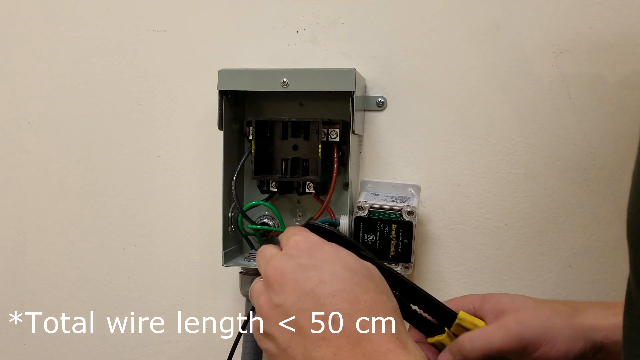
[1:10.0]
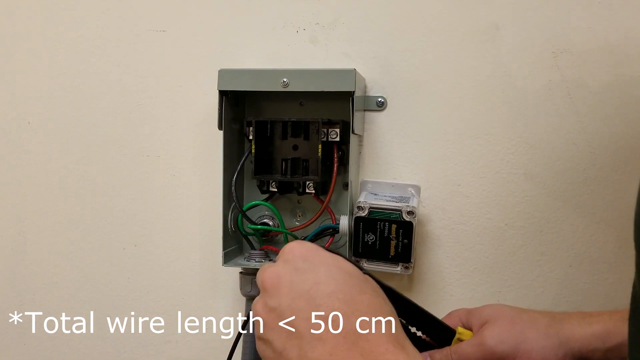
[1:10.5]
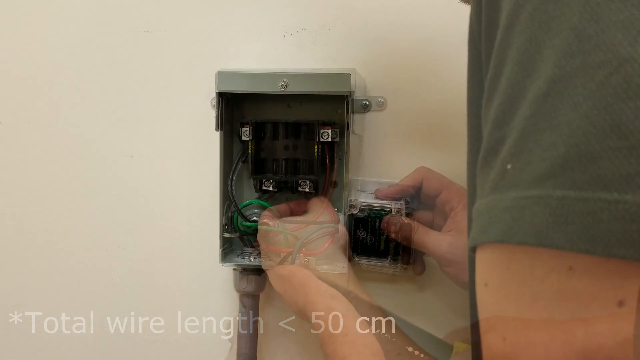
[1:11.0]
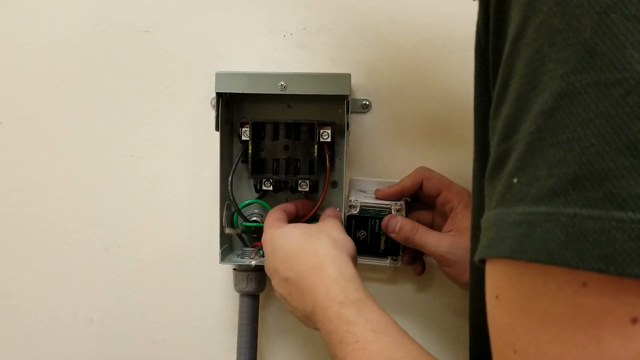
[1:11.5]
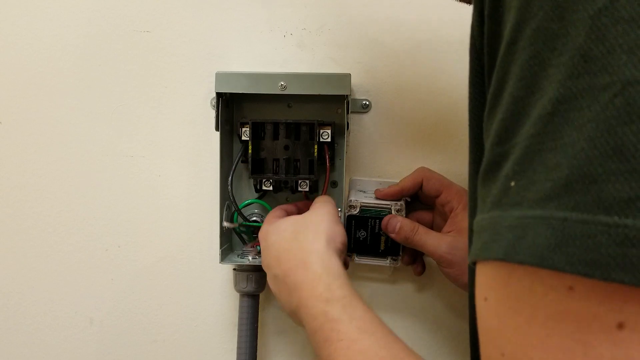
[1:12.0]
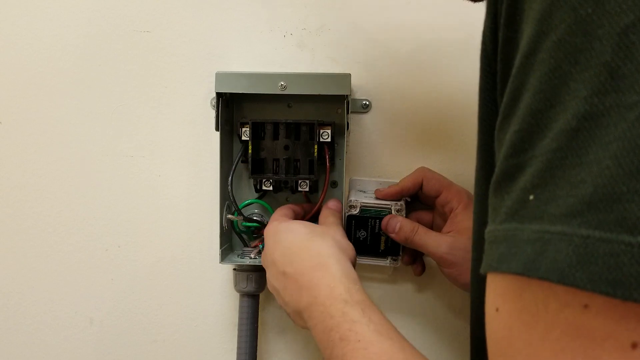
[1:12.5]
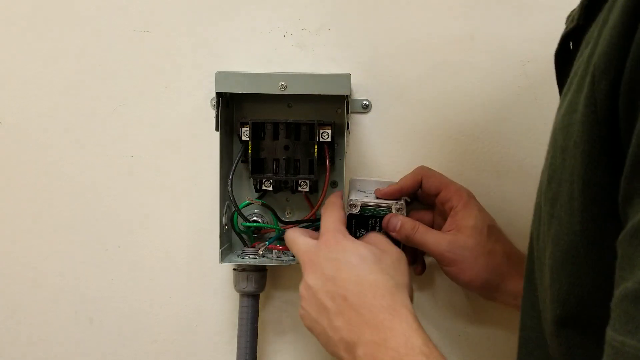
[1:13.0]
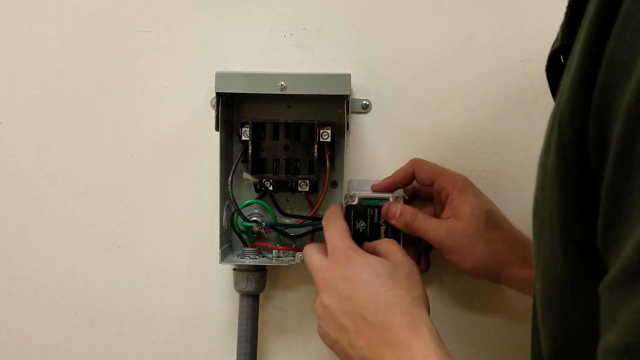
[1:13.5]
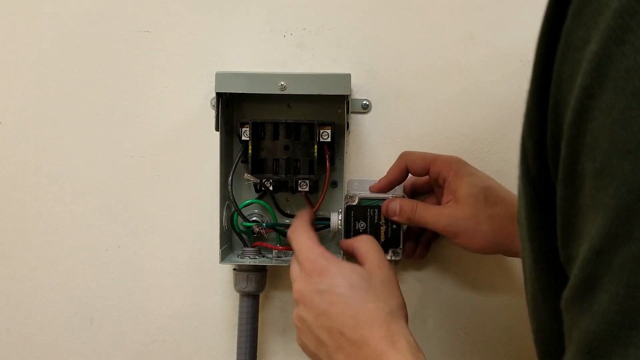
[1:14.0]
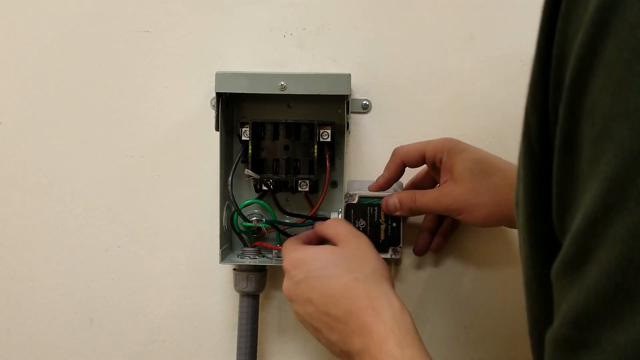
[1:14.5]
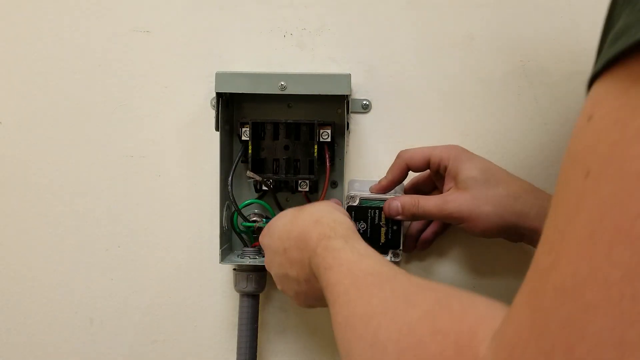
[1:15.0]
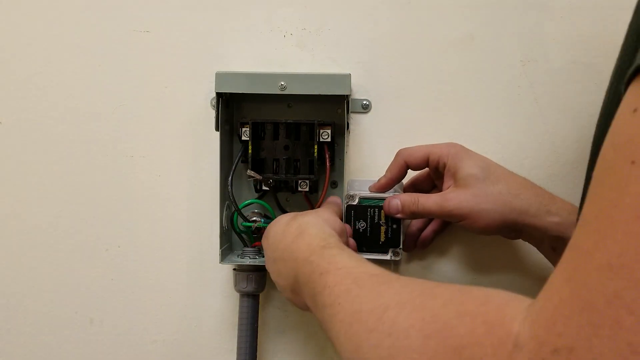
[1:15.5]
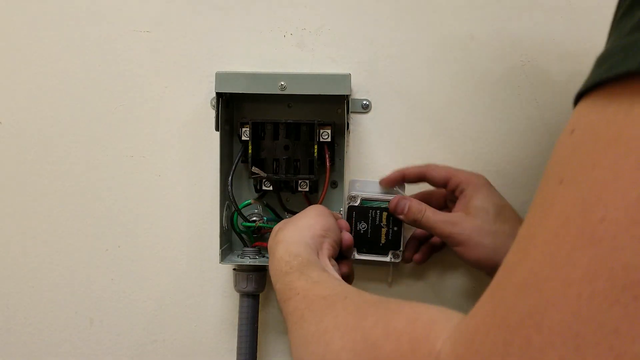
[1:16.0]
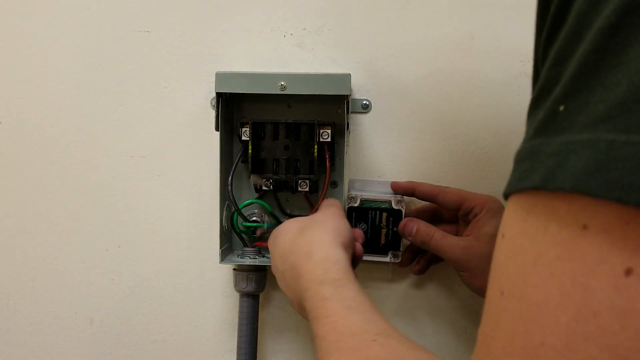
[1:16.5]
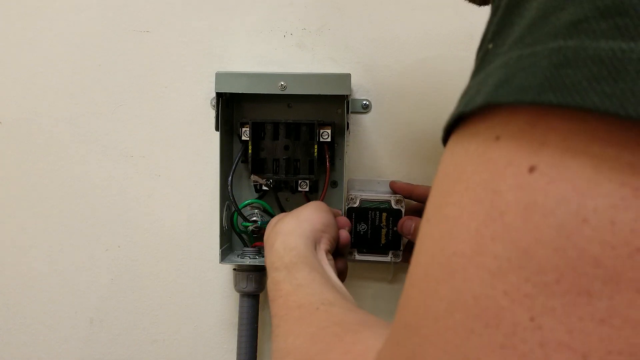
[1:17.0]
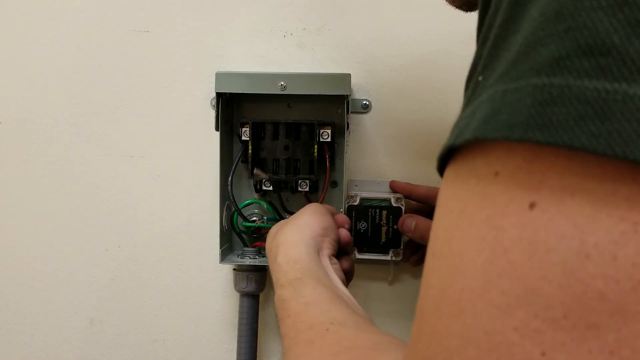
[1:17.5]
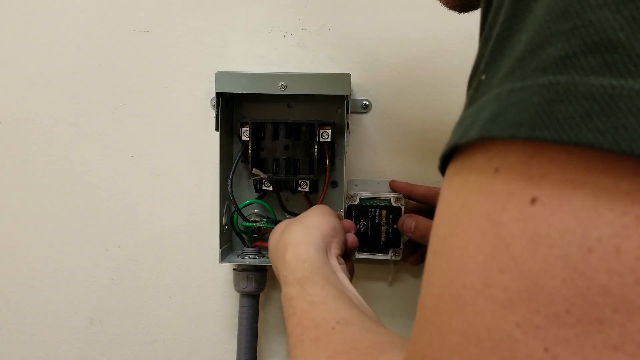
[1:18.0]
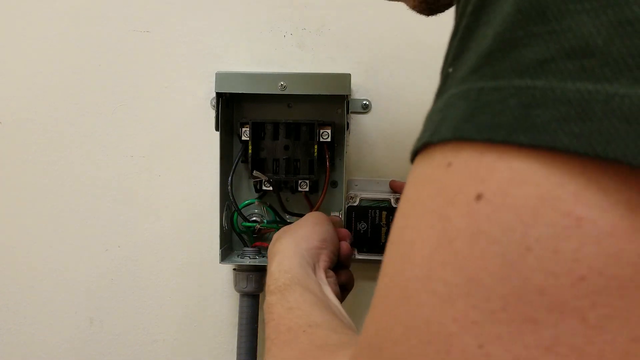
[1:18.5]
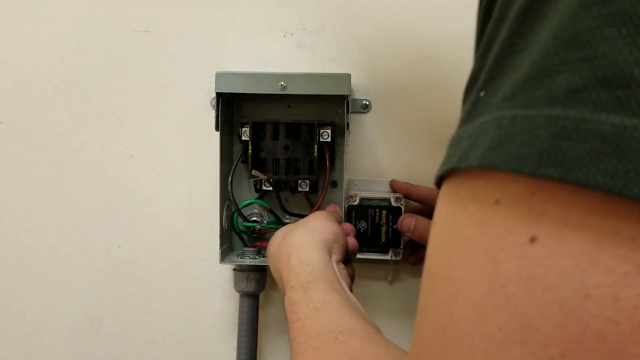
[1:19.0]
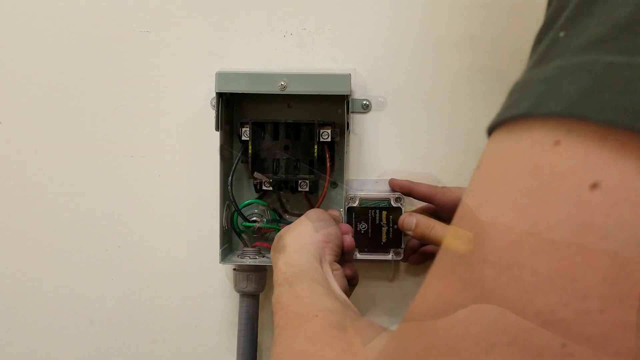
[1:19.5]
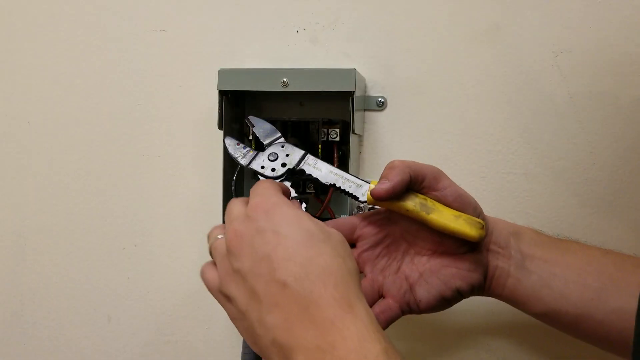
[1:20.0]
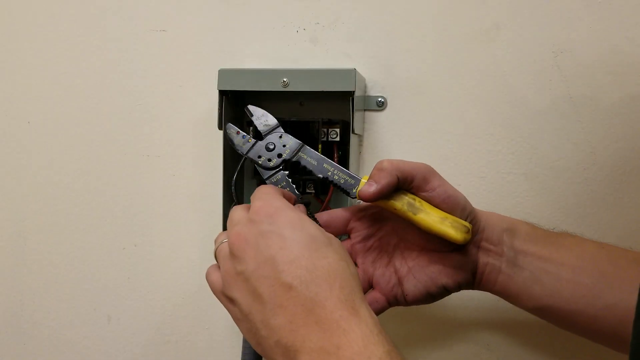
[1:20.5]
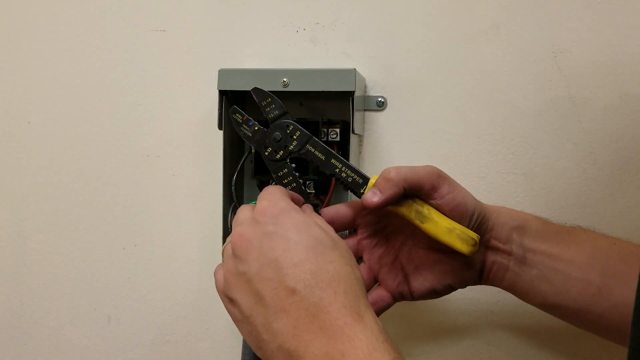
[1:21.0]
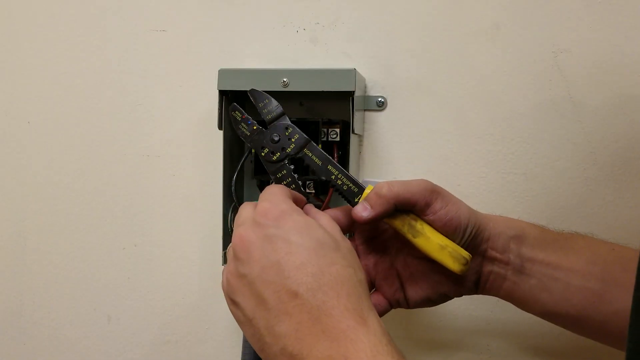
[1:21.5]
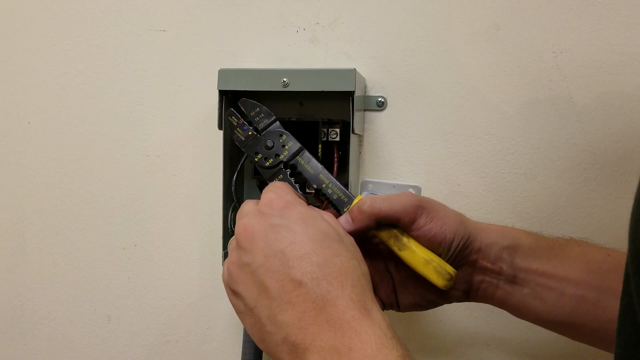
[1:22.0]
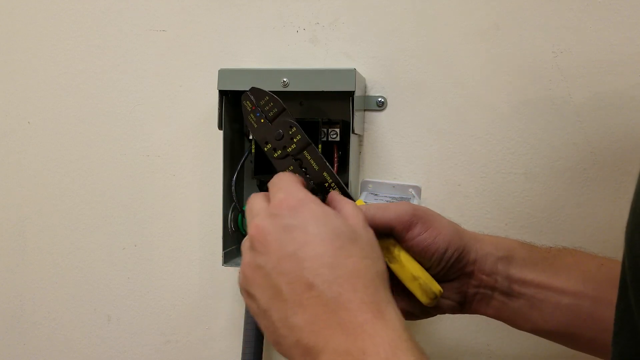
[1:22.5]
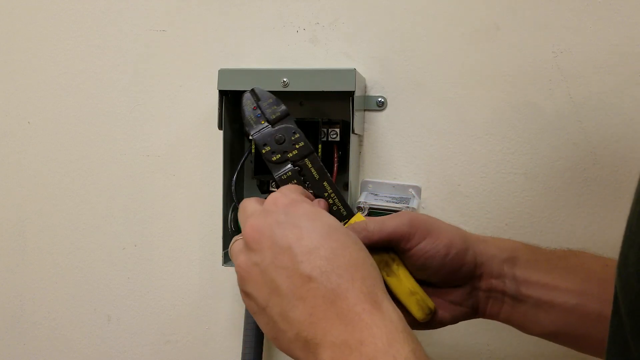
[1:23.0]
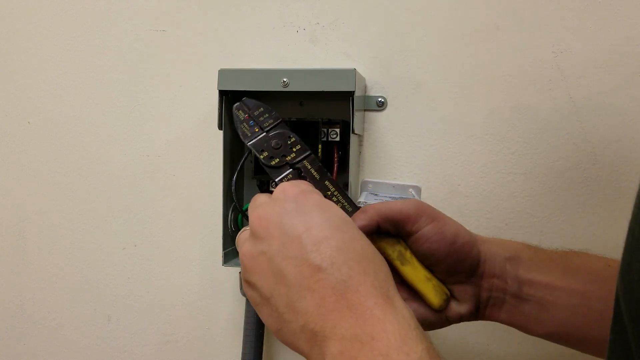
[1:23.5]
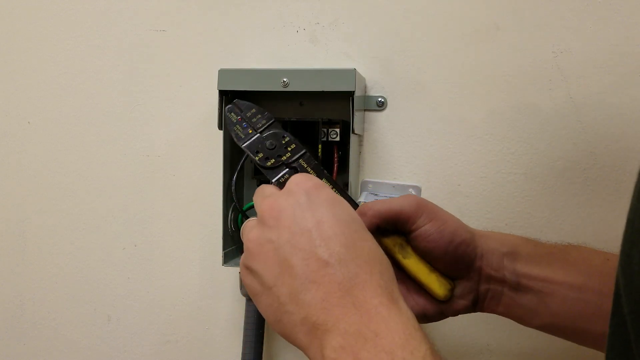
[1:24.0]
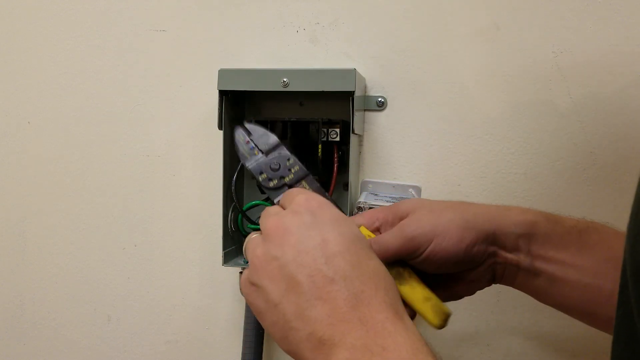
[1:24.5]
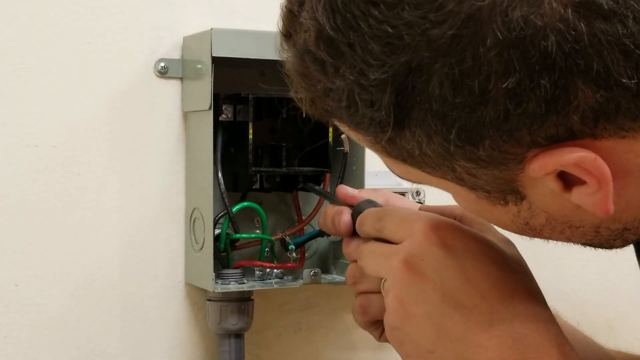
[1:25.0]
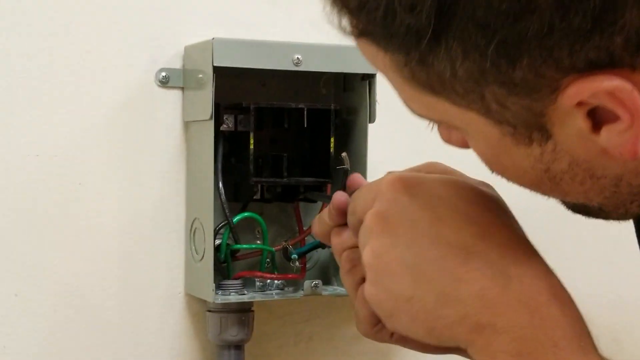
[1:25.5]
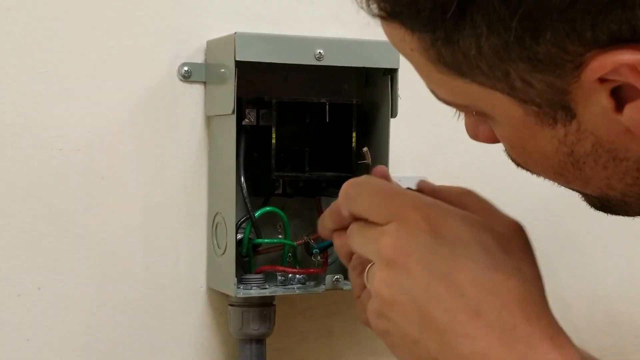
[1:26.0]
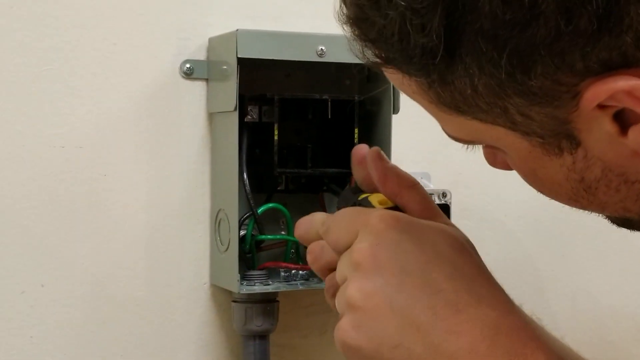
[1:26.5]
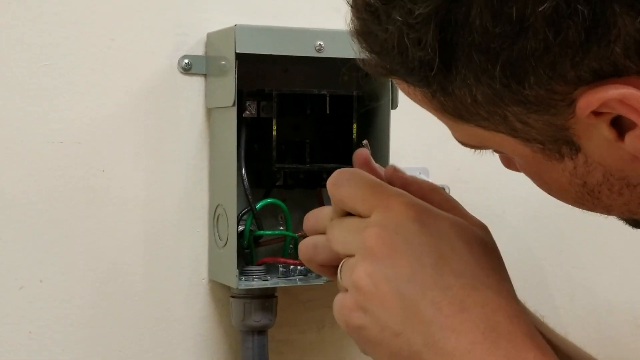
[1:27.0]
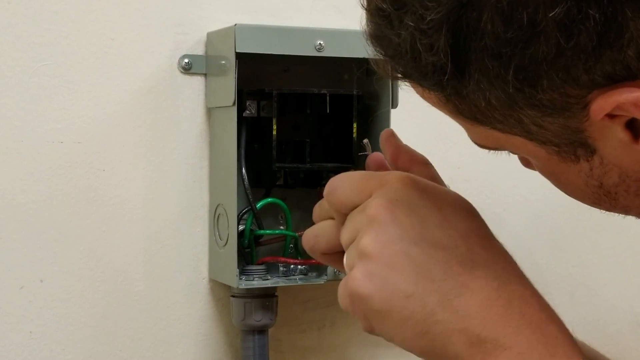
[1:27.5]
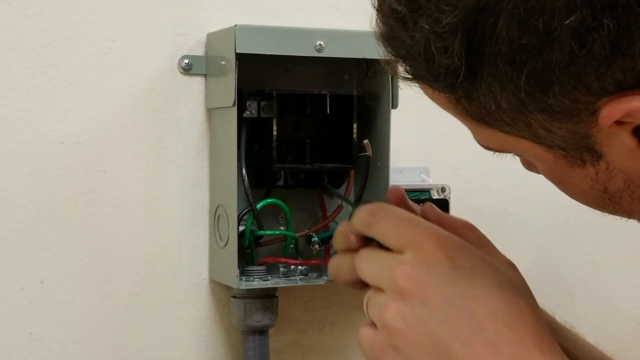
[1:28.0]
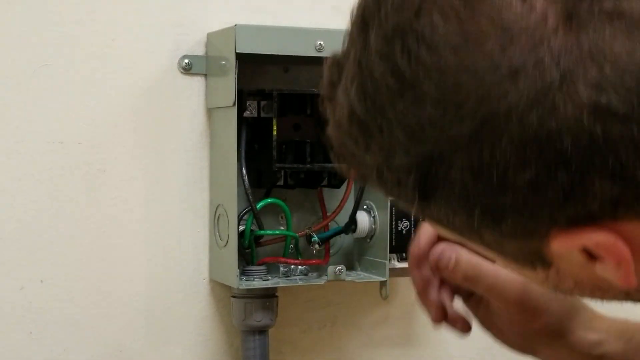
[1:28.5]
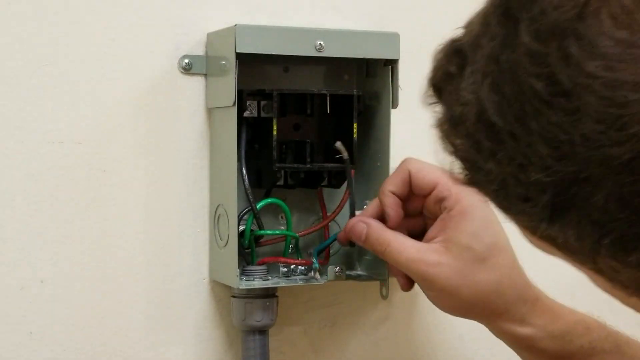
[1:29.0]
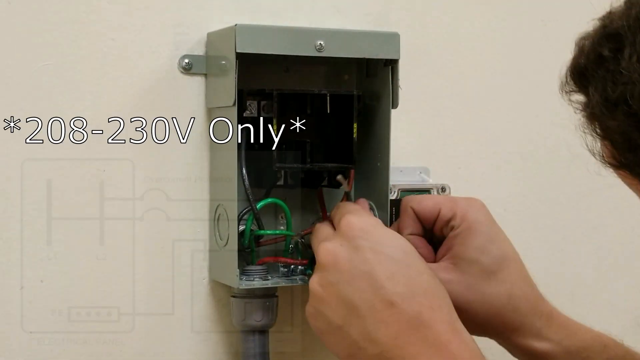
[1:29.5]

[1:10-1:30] He cuts the wires; three wires are attached to the surge protector, one dark green and two black, and silver fraying shows where they are cut. He then keeps the surge protector stable by putting a nut and bolt in from the inside of the panel and screwing it in so it does not move when wiggled. He picks up the pliers again and seemingly puts something inside it, though his hands cover it. In the last few seconds he screws something in at the bottom of the black box inside the panel, again obscured. A graphic or diagram is then overlaid, showing the electrical panel and where it connects with the surge protector, with white asterisked text reading "208 to 230 volts only."